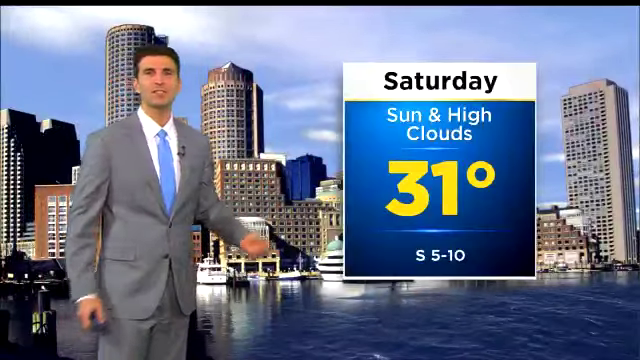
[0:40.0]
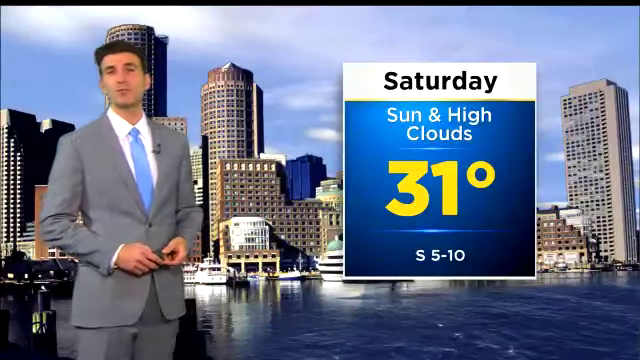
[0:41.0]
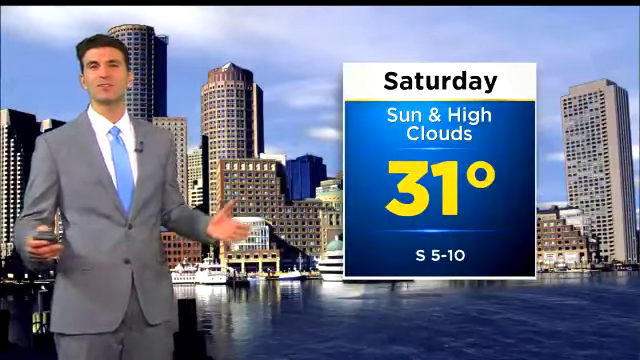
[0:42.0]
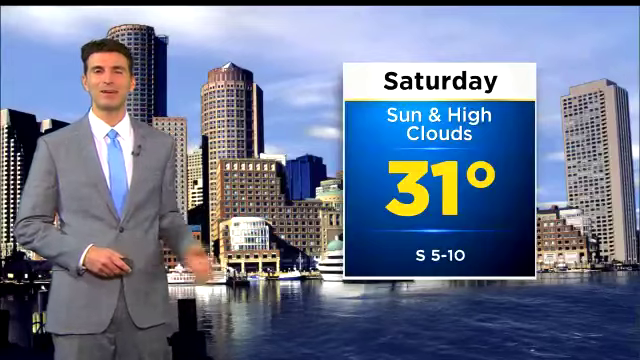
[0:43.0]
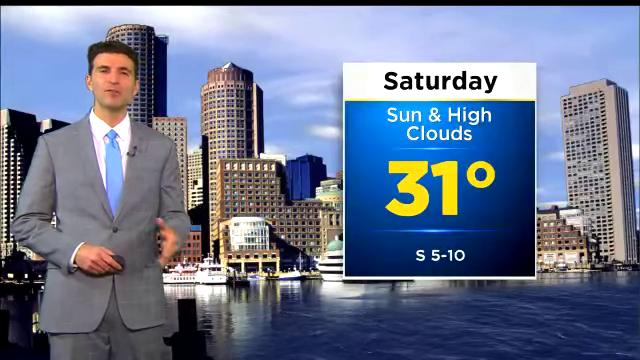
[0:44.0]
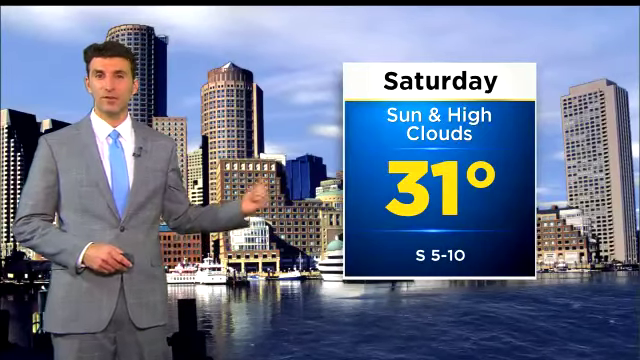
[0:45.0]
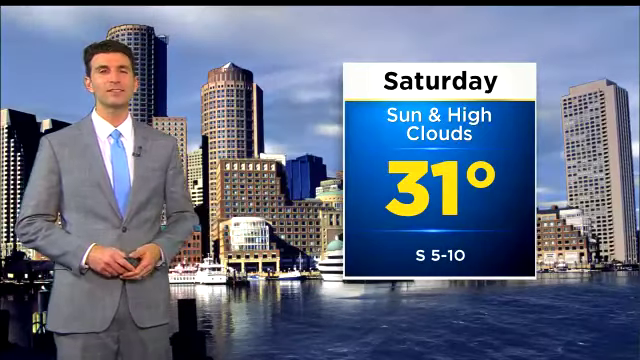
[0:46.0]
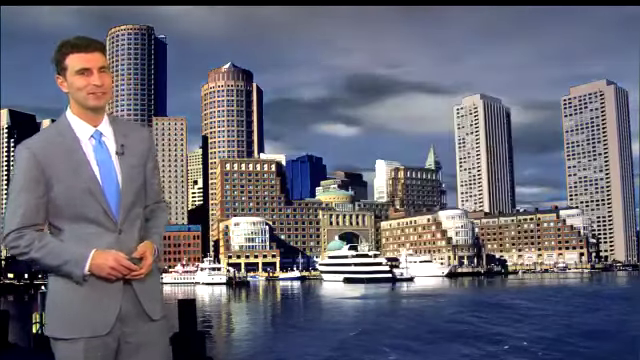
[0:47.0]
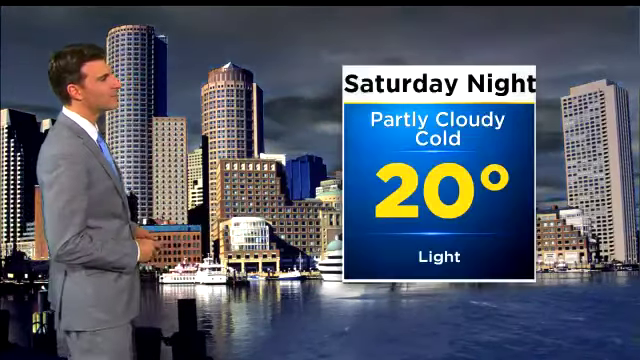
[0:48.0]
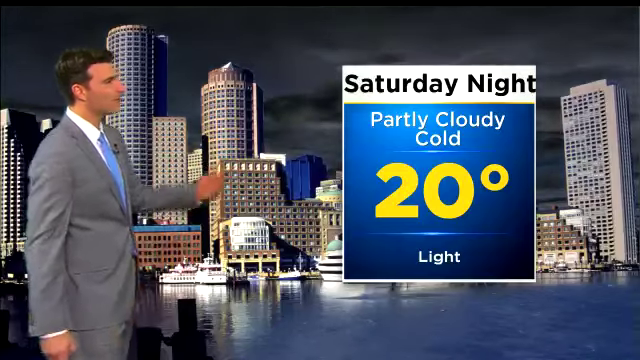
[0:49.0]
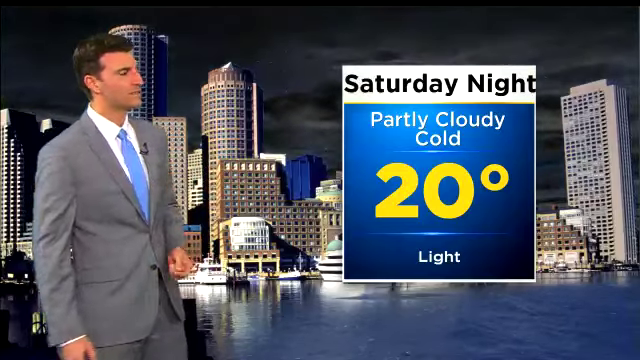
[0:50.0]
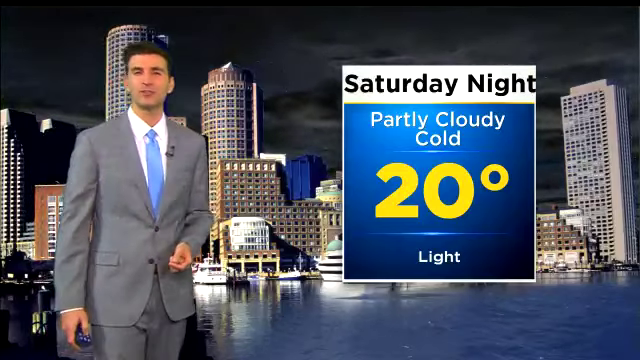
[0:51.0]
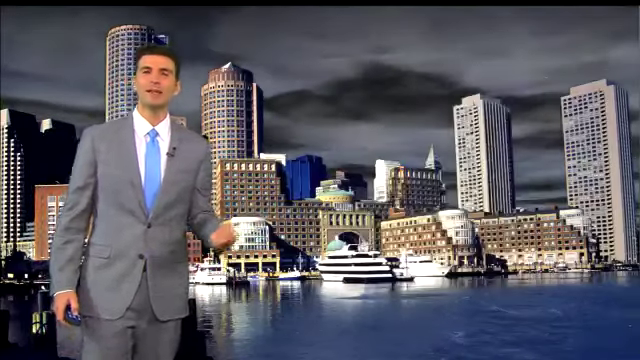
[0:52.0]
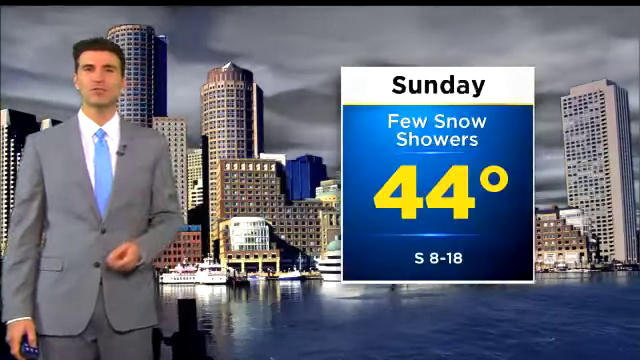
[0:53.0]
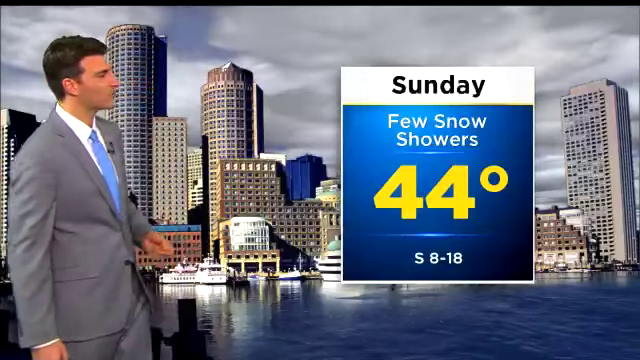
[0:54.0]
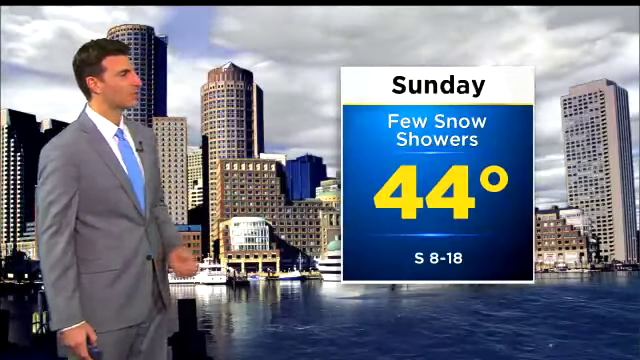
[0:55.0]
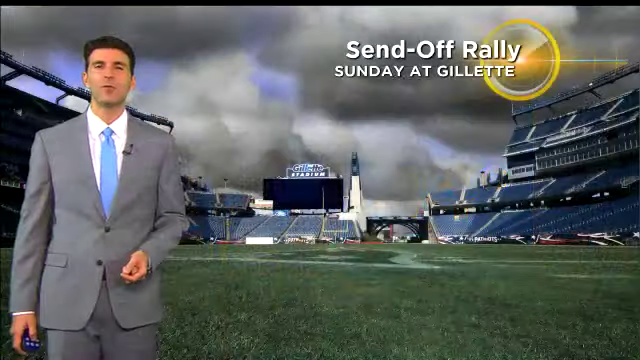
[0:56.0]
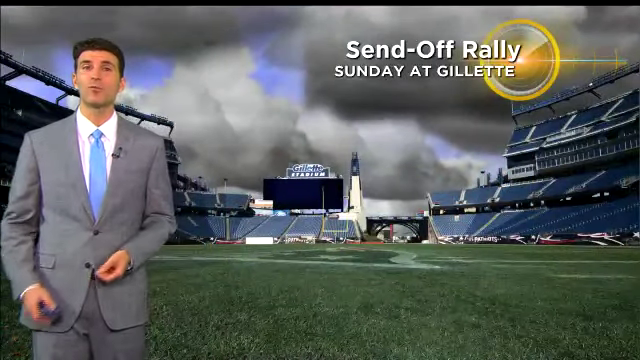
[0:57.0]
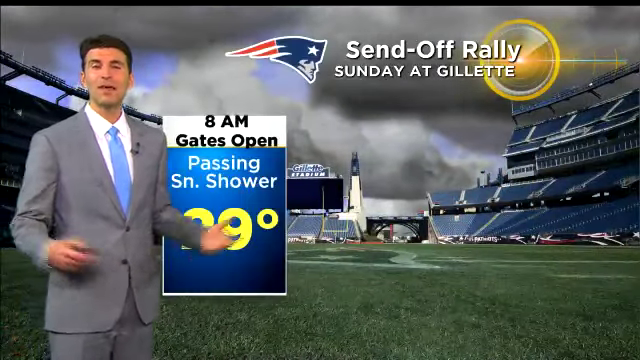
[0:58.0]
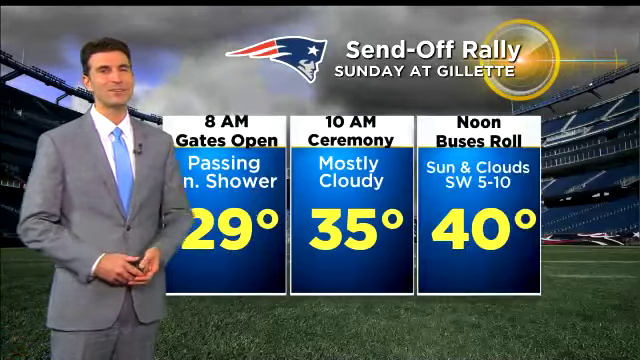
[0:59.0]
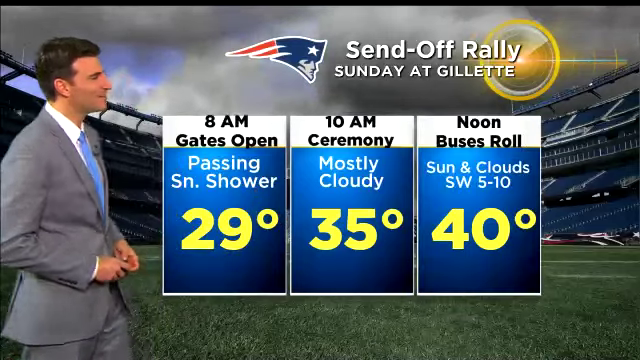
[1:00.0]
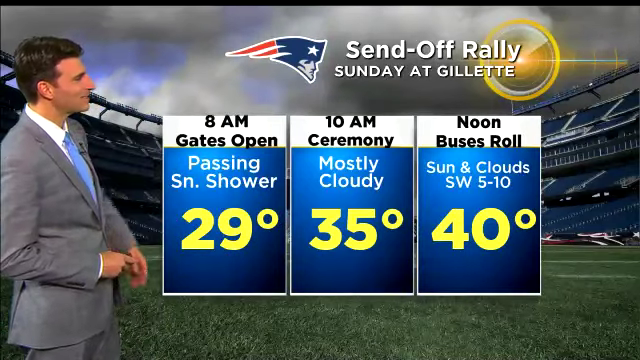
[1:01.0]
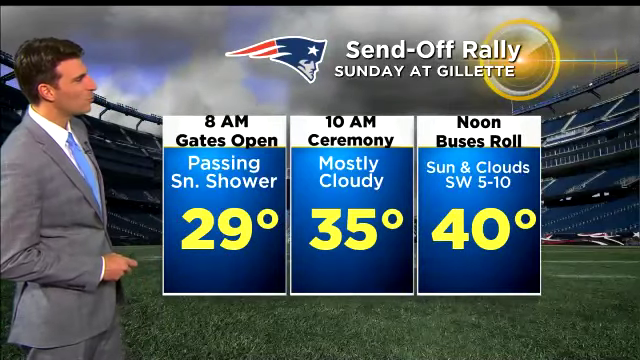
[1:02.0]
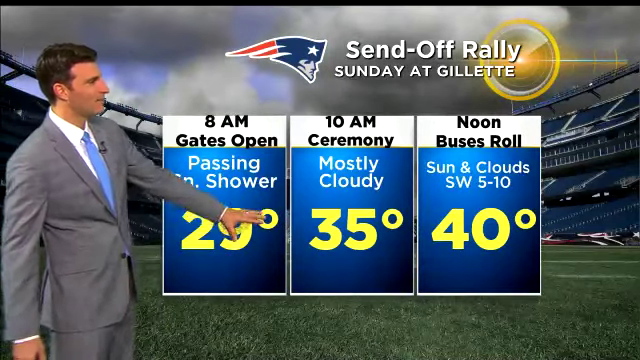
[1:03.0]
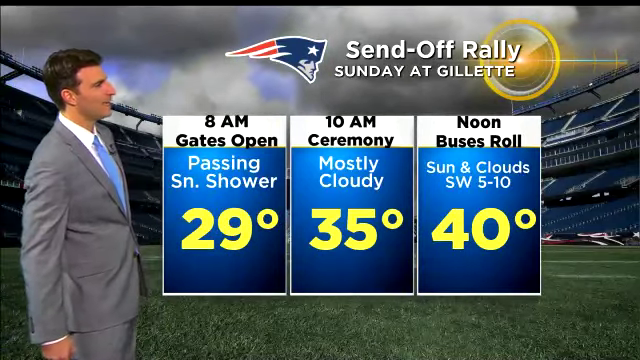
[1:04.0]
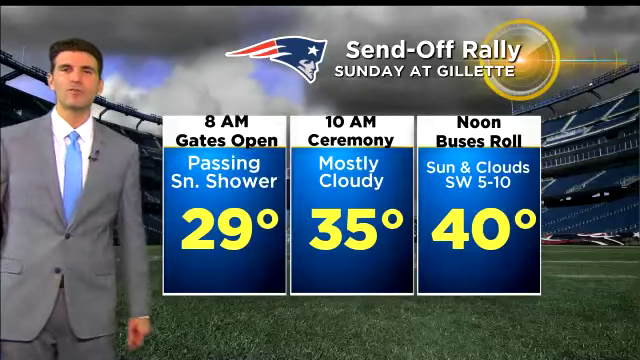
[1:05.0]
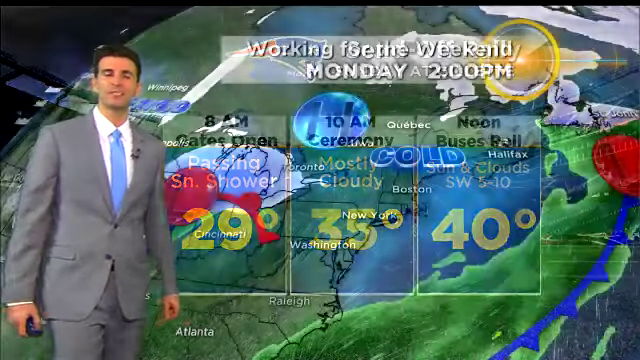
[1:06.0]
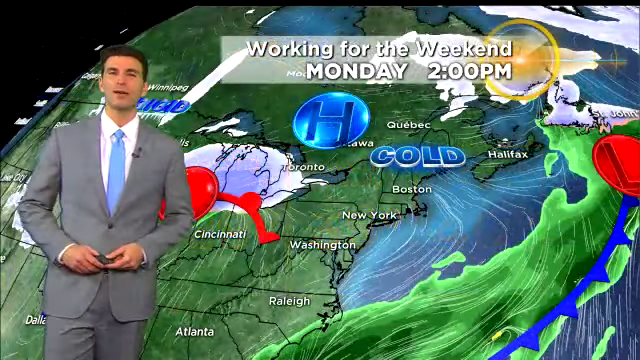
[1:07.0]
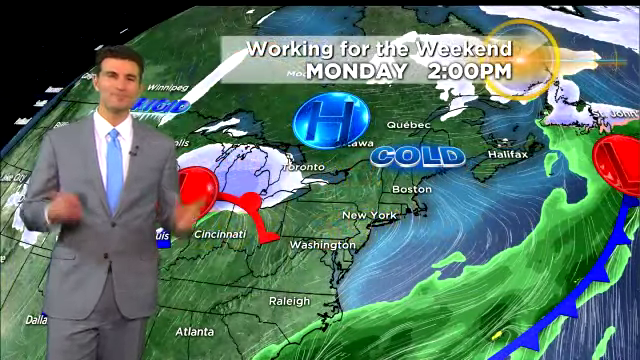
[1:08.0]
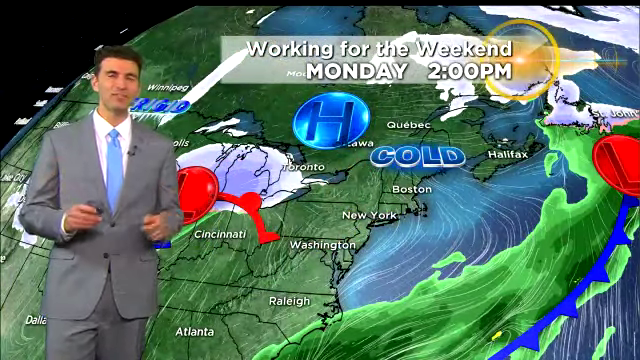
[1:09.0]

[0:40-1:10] The presenter moves to another view showing few snow and 44 degrees, then to another weather condition as he moves around. An hour-by-hour schedule shows "8 a.m. gates open" at 29 degrees, "10 a.m. ceremony, mostly cloudy, 35 degrees", and "noon, buses roll" at 40 degrees, for a "send-off rally Sunday at Gillette".